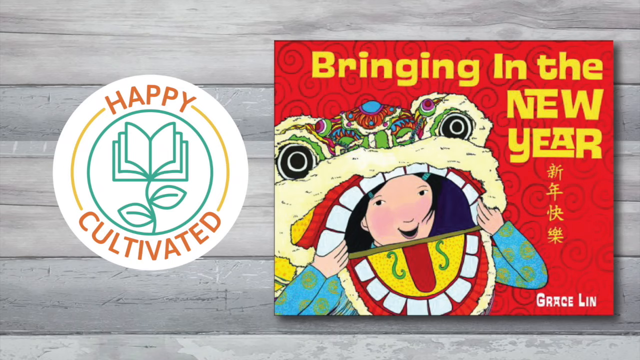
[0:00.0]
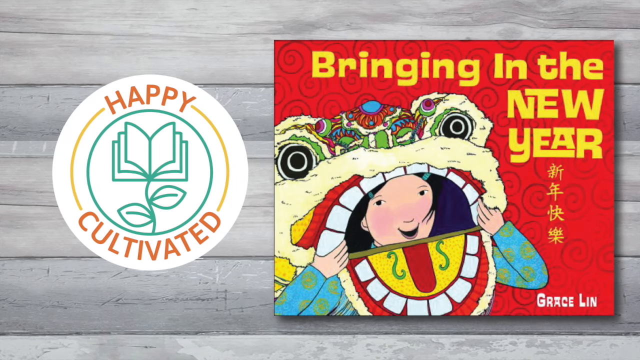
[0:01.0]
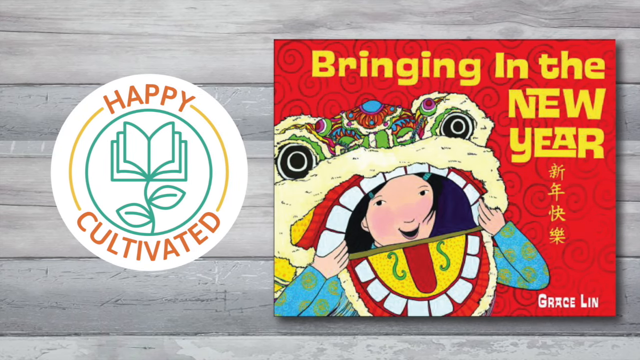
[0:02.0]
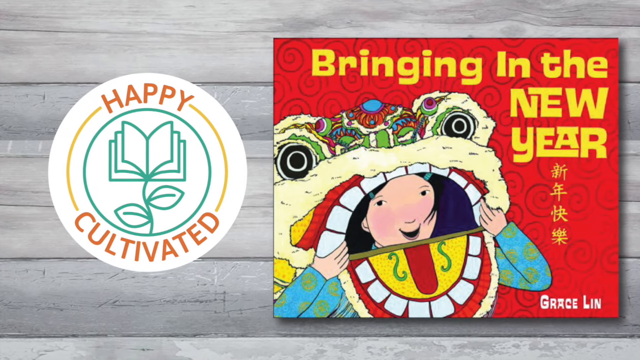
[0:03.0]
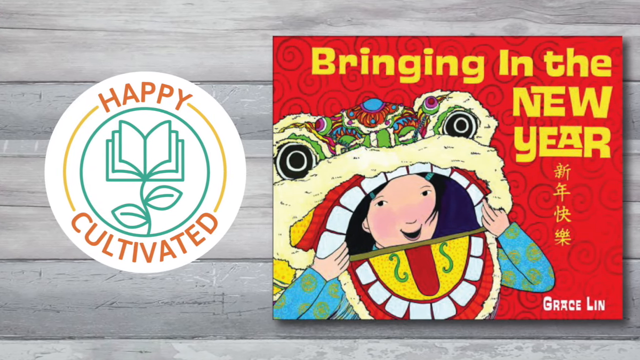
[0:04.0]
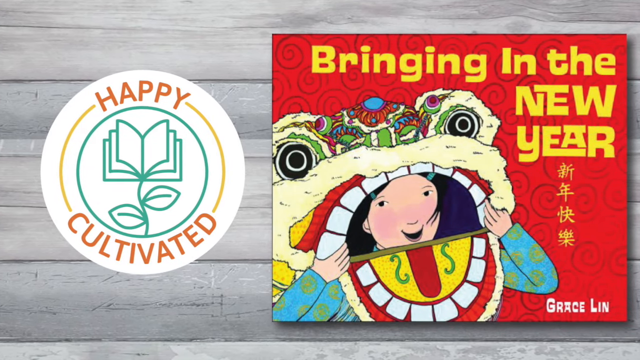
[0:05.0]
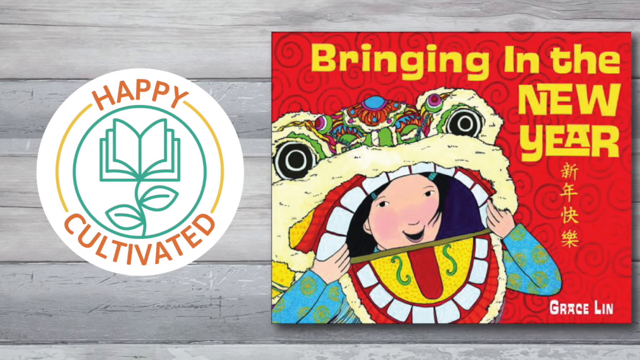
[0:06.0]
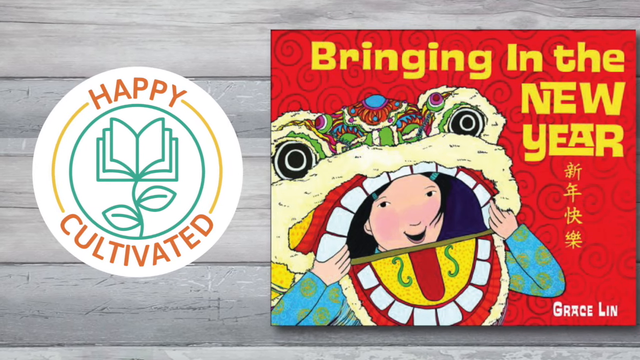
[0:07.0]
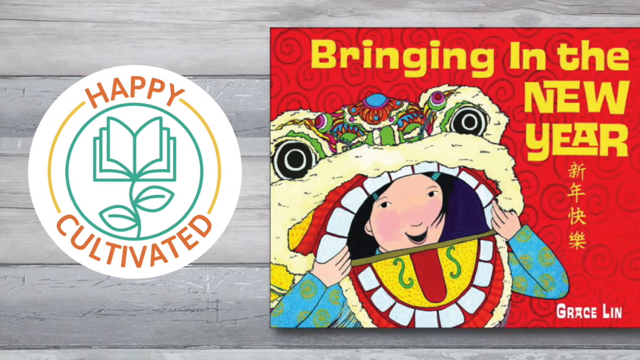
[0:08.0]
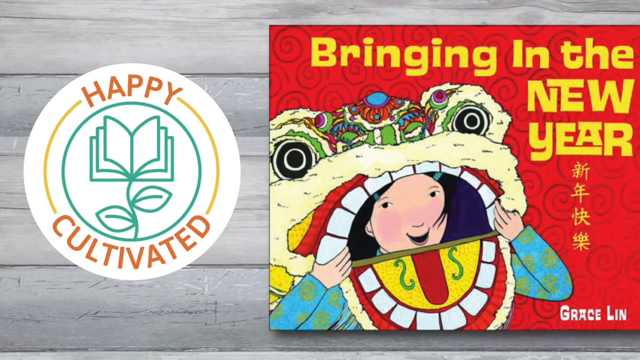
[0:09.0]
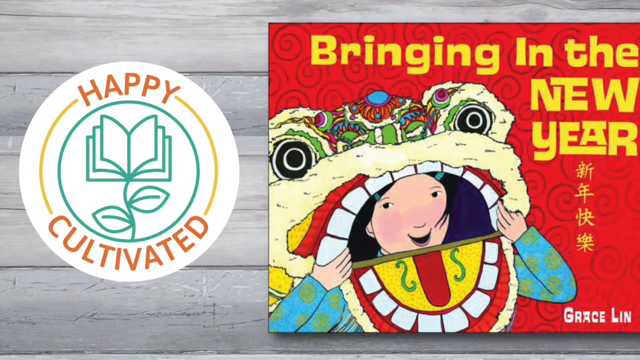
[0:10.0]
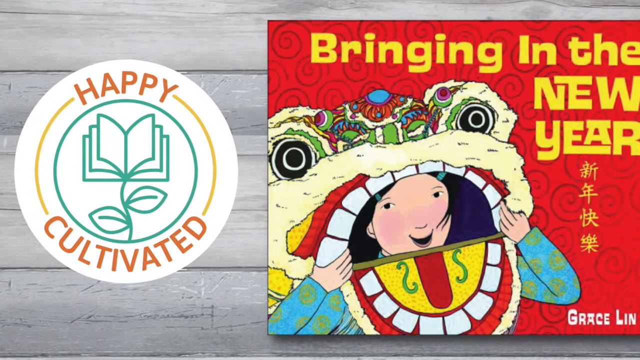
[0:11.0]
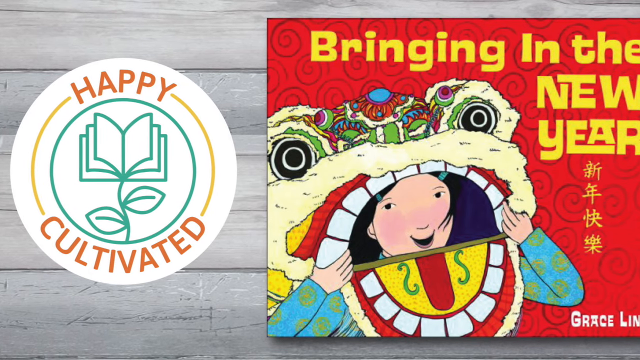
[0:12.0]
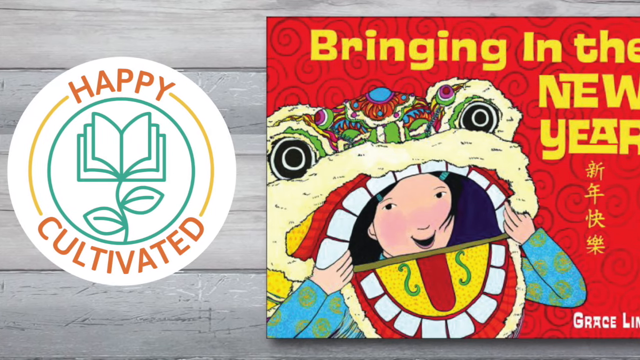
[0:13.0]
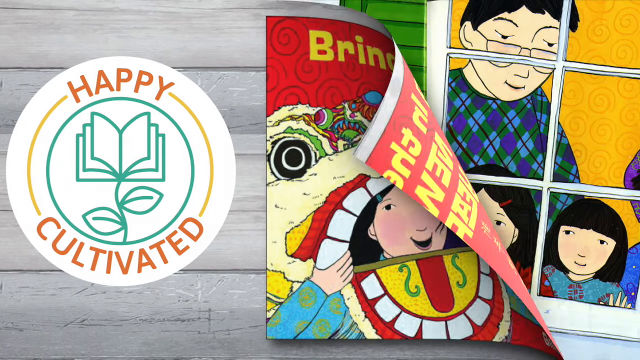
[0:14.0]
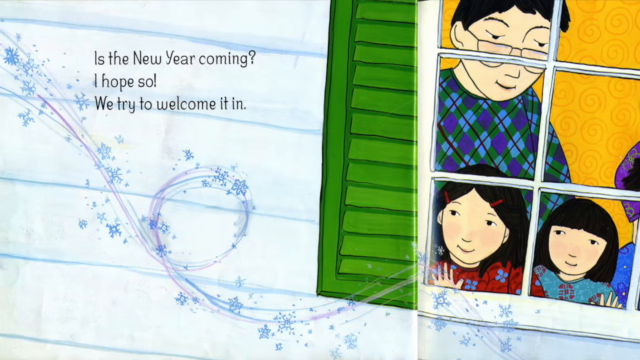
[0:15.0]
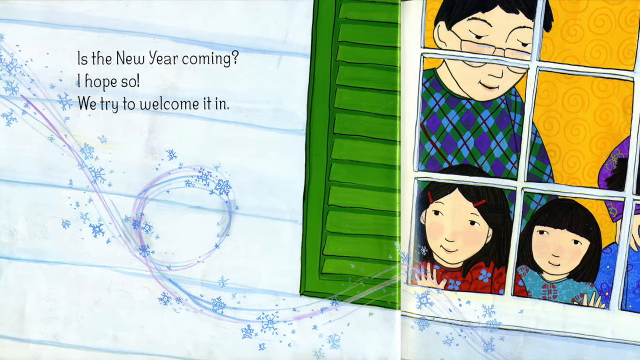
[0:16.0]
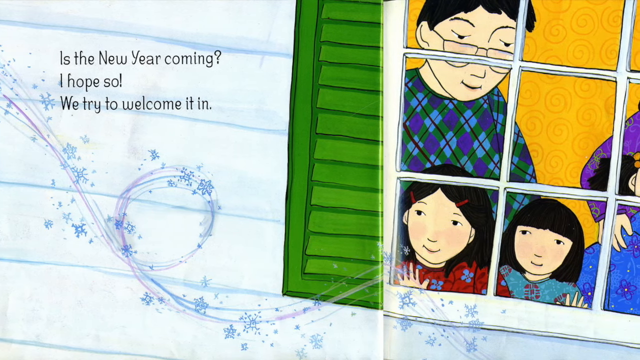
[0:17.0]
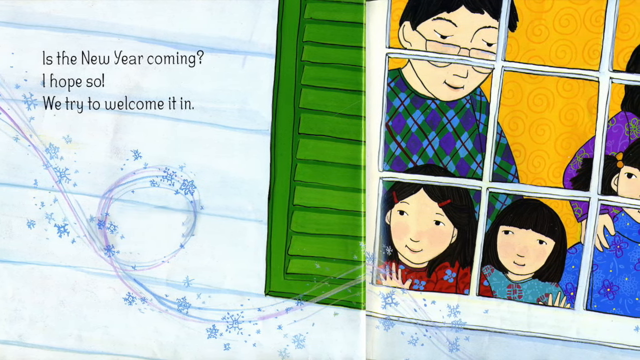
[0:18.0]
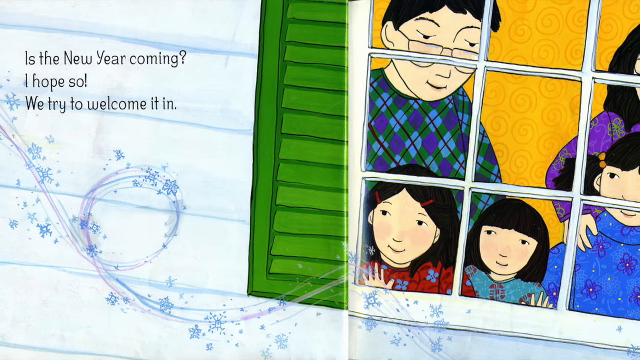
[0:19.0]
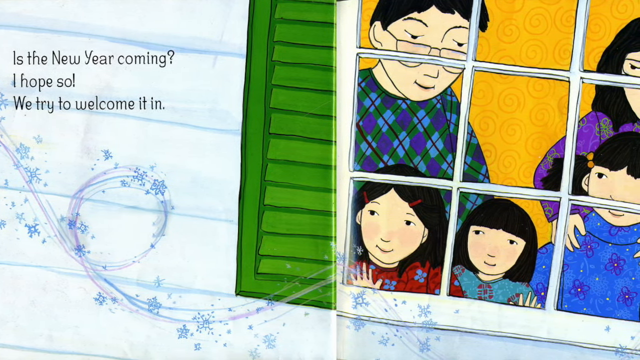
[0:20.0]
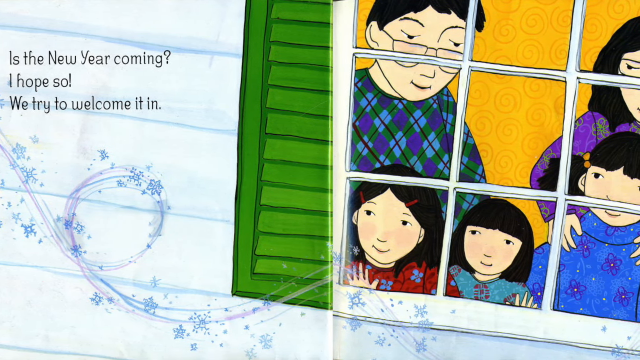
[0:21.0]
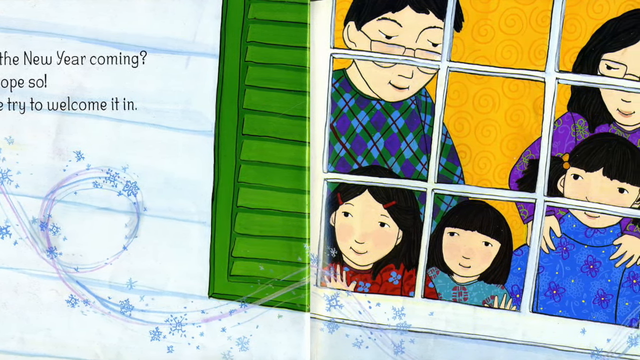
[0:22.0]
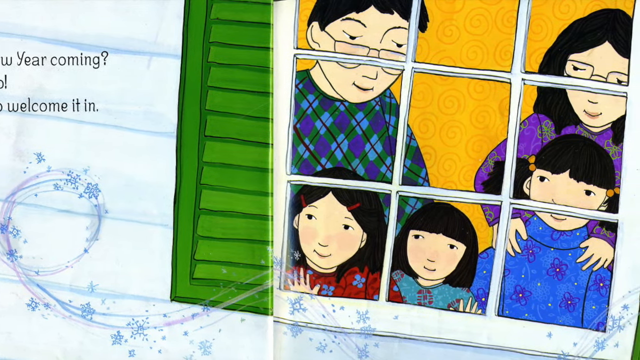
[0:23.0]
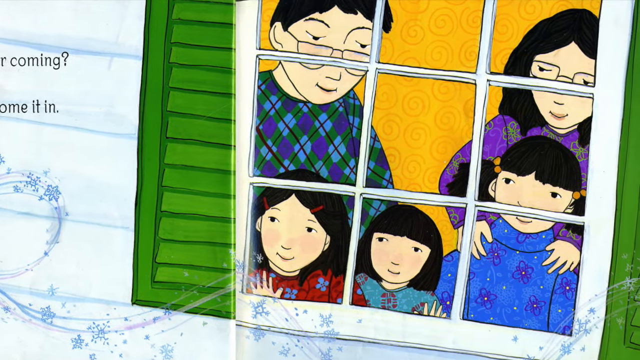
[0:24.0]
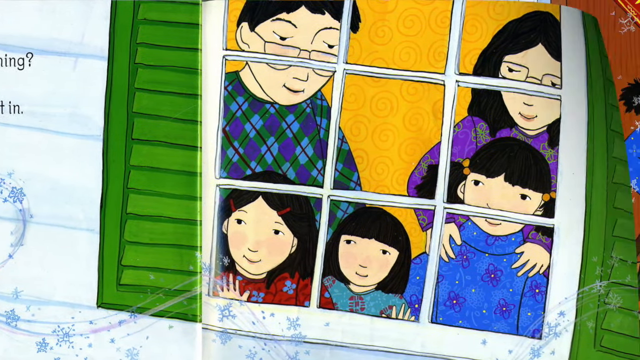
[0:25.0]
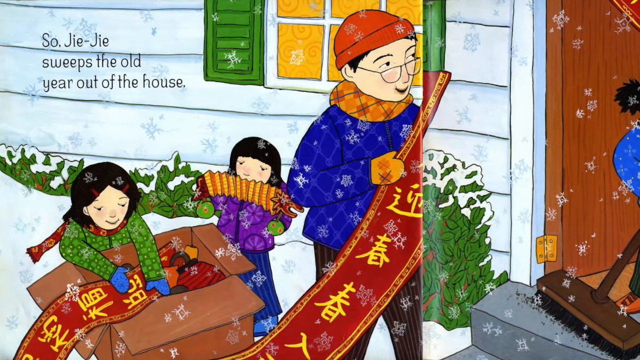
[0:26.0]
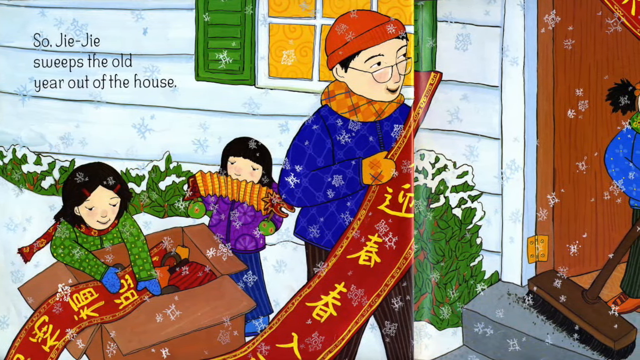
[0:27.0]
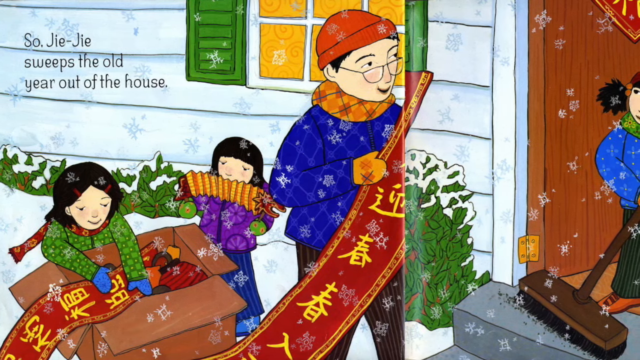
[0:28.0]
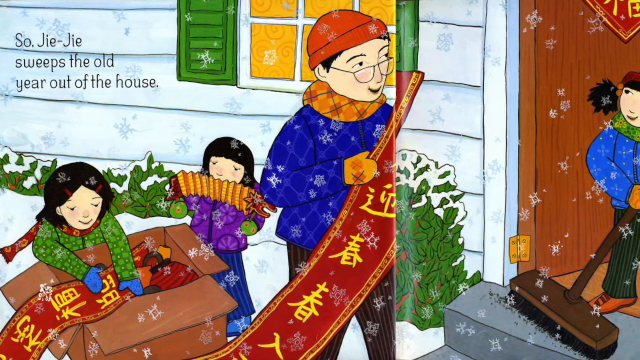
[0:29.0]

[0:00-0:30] A book appears on the right side of the screen, titled "Bringing in the New Year", by Grace Lin; it seems to be about Asian culture. Its cover shows a Chinese dragon with a smiling, black-haired girl inside it, playing around. On the left, beside the book, is what looks like a stamp that says "Happy Cultivated" in orange letters; inside it is a circle containing a plant that looks like a flower but is actually a book. The view zooms in as if a page has turned to the left, revealing the start of the story. On the left page the text reads "is the new year coming? I hope so. We try to welcome it in." On the right, a family stands inside a house, looking out the window as the wind blows snow around. The page turns again to reveal a page reading "So, Jie-Jie sweeps the old year out of the house." The family appears to be putting decorations away and maybe pulling out new ones, and on the far right what may be a child or a mother sweeps things out the door.